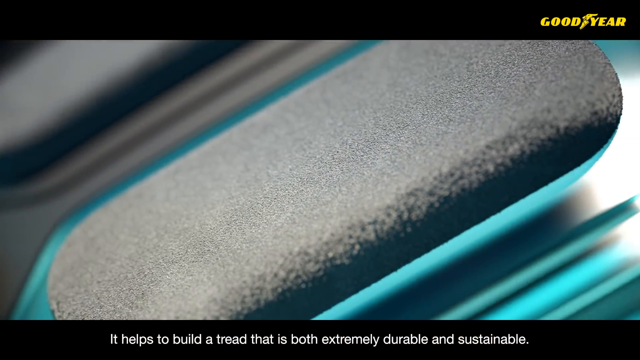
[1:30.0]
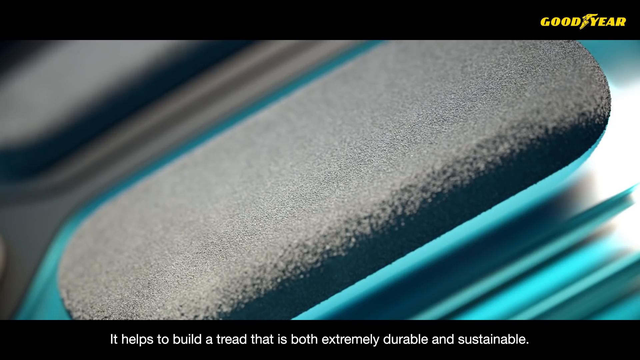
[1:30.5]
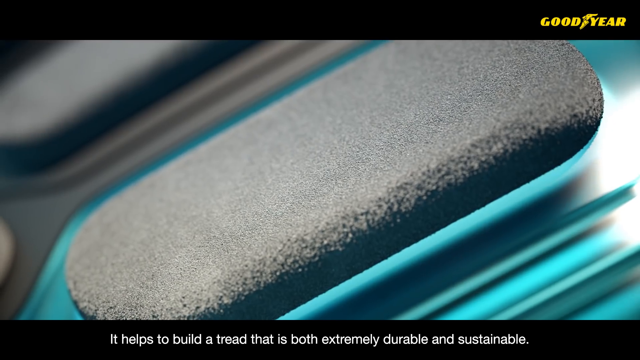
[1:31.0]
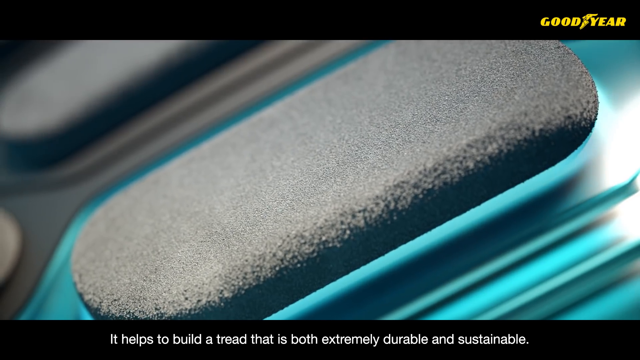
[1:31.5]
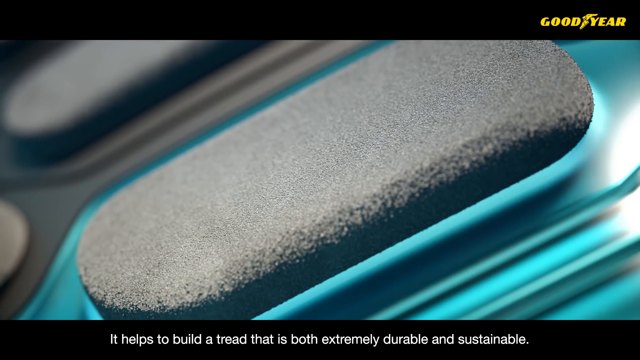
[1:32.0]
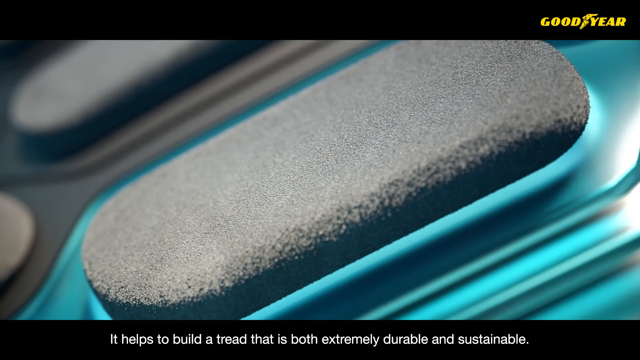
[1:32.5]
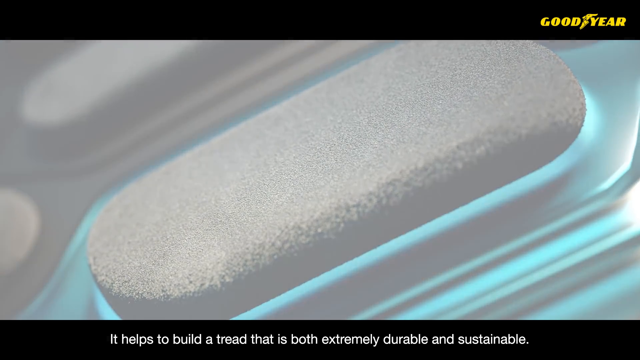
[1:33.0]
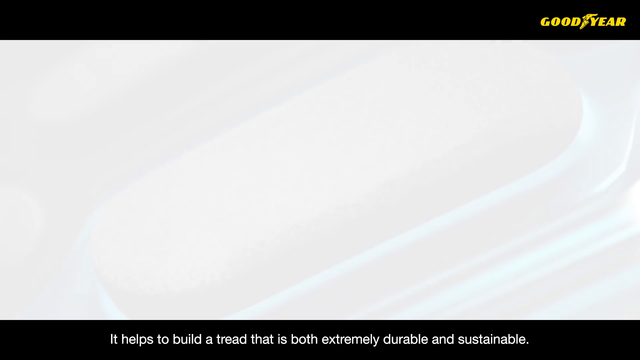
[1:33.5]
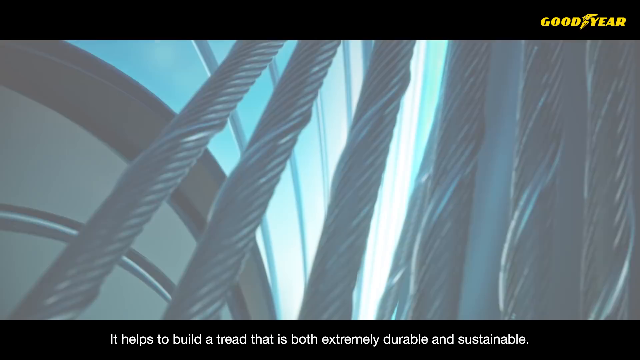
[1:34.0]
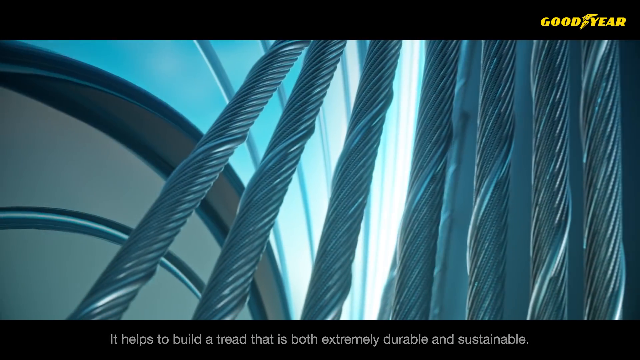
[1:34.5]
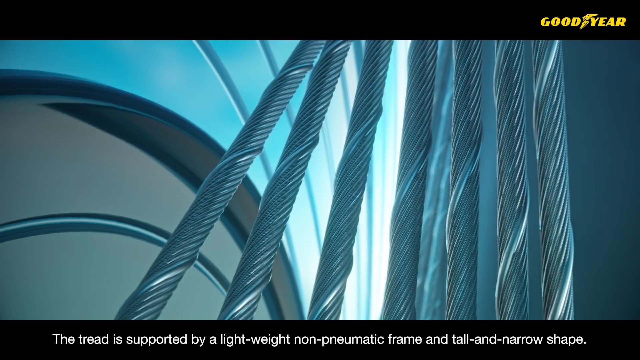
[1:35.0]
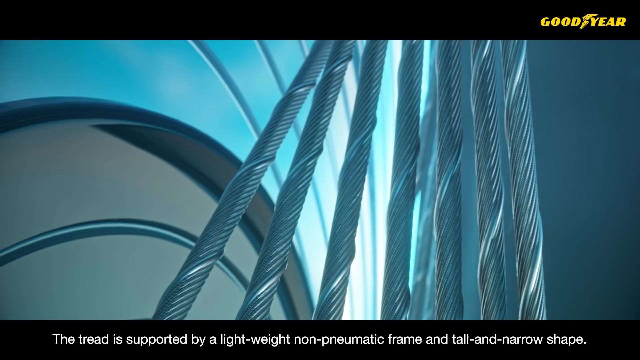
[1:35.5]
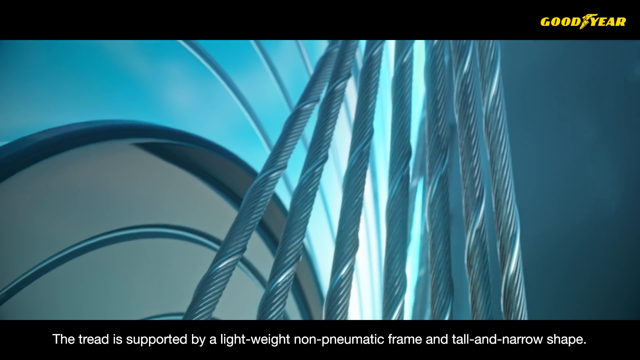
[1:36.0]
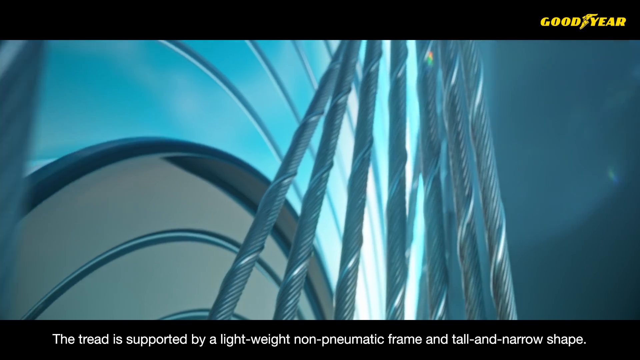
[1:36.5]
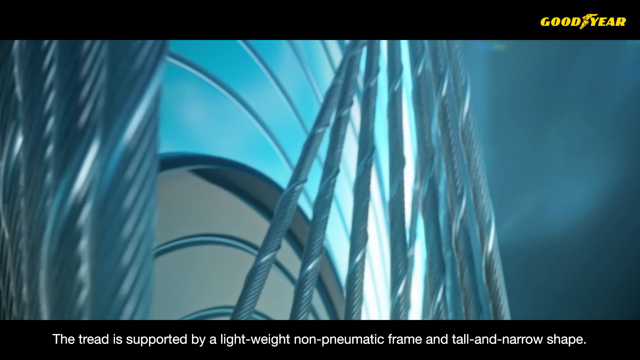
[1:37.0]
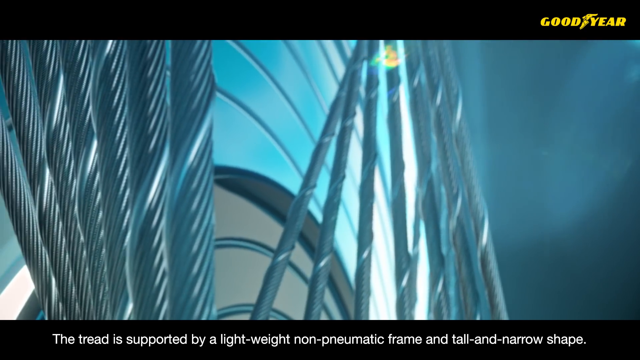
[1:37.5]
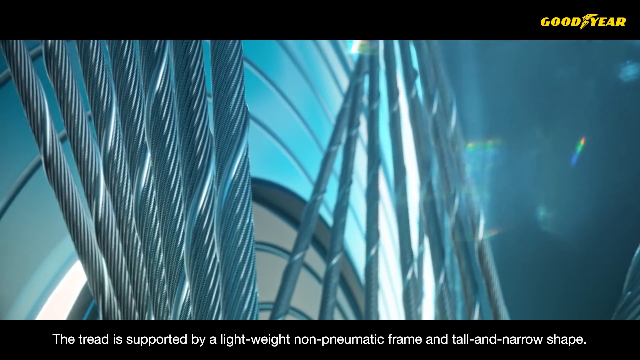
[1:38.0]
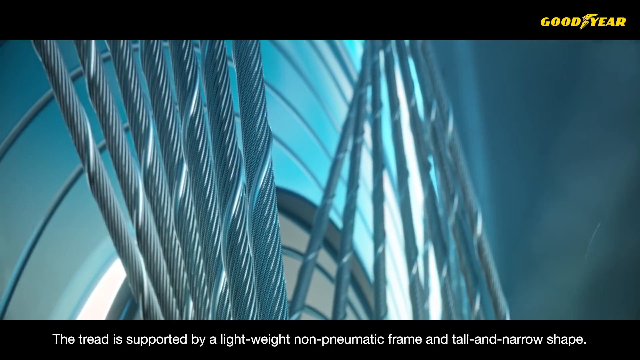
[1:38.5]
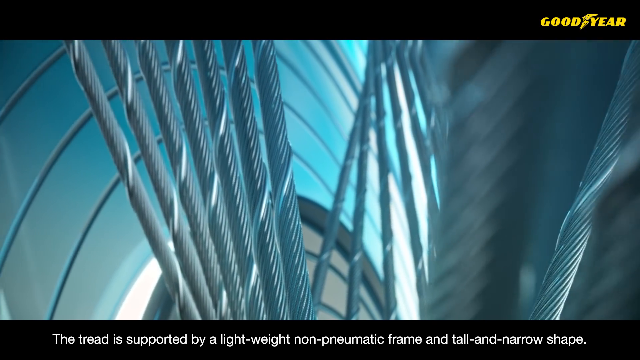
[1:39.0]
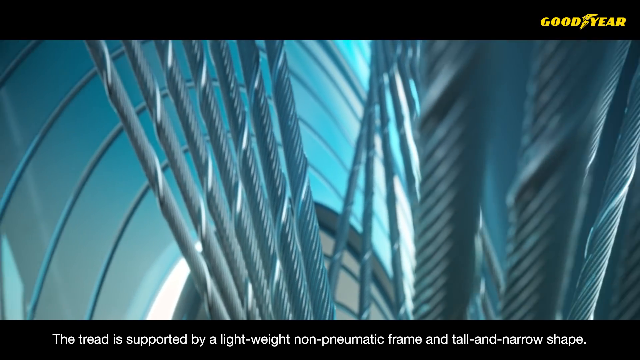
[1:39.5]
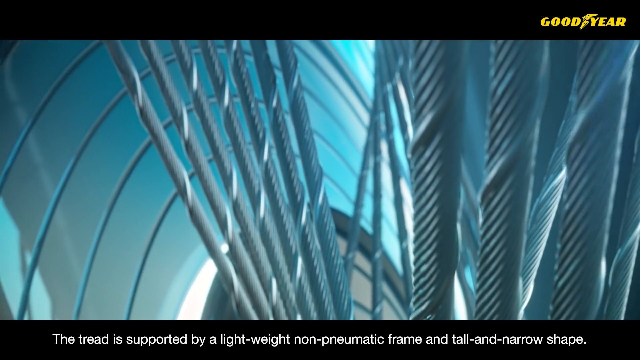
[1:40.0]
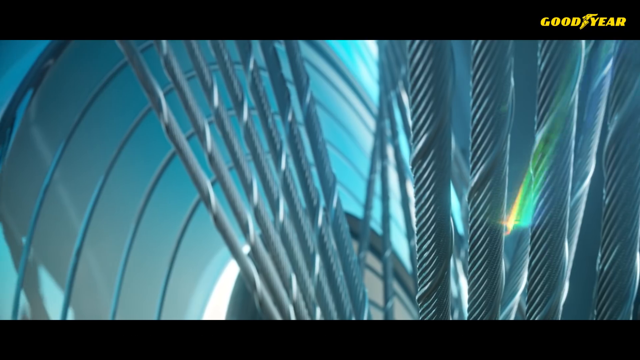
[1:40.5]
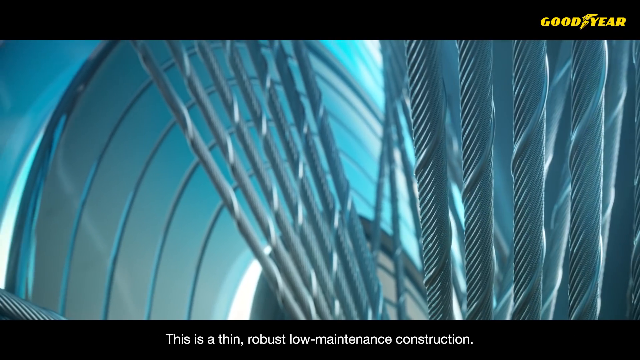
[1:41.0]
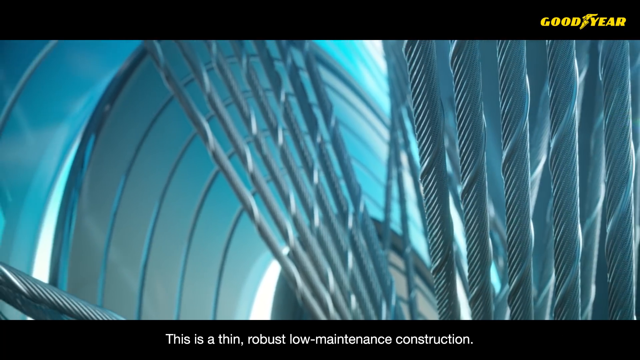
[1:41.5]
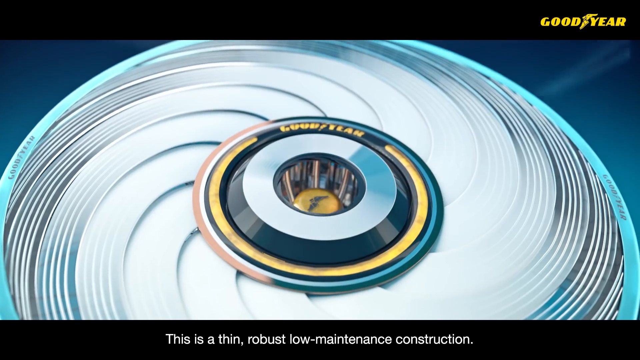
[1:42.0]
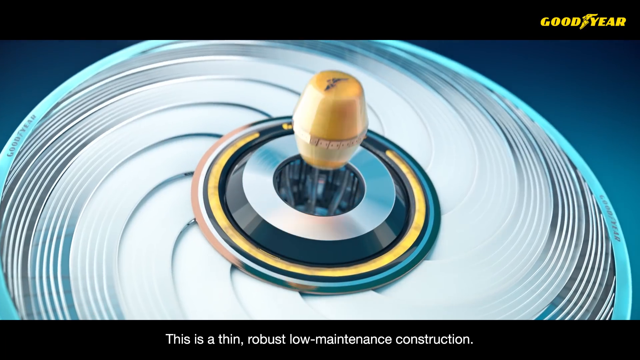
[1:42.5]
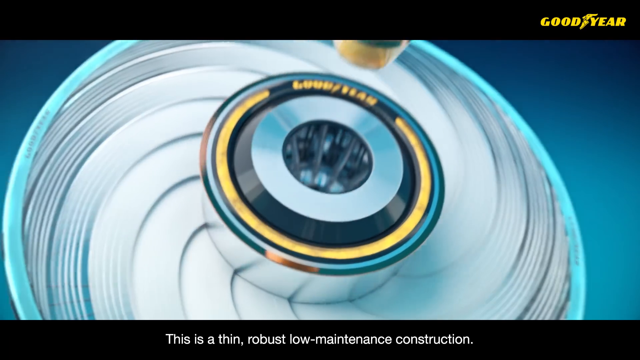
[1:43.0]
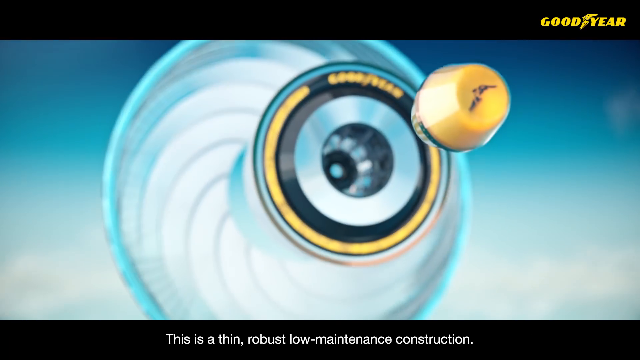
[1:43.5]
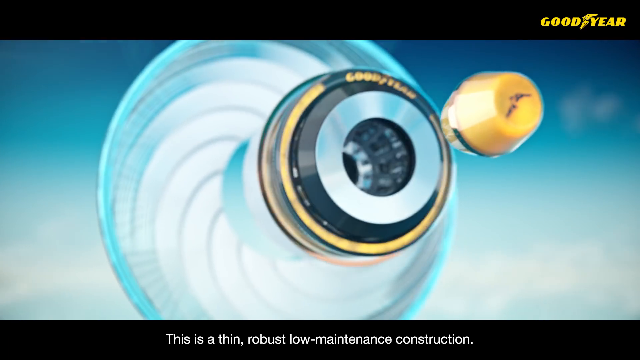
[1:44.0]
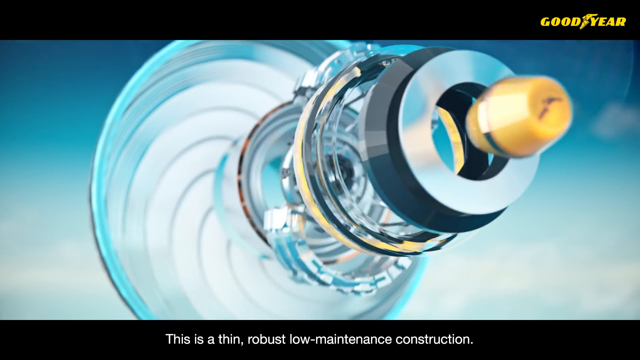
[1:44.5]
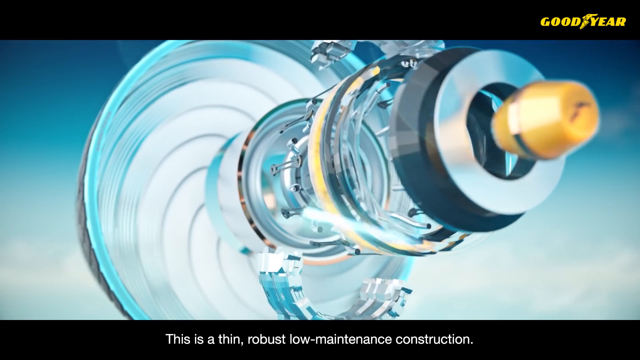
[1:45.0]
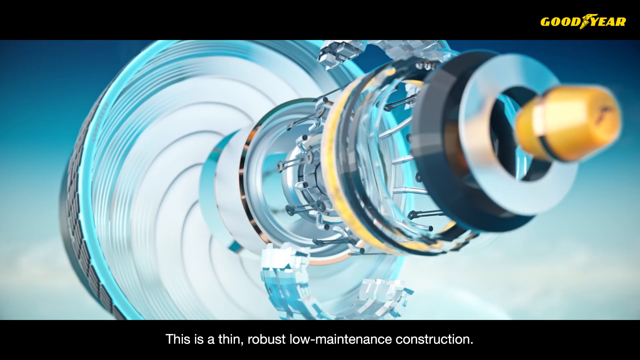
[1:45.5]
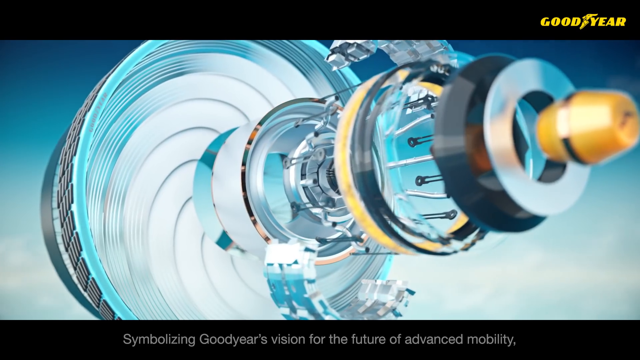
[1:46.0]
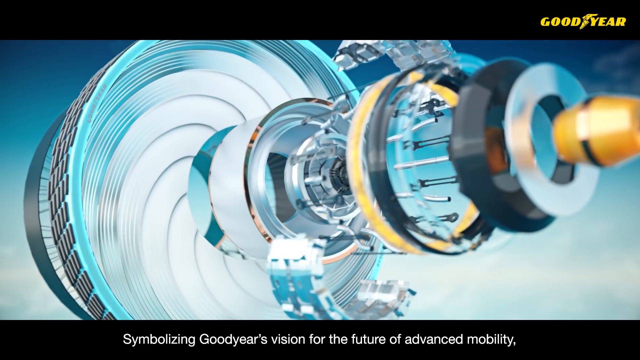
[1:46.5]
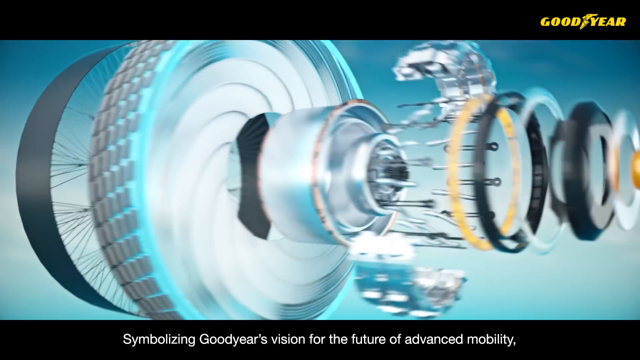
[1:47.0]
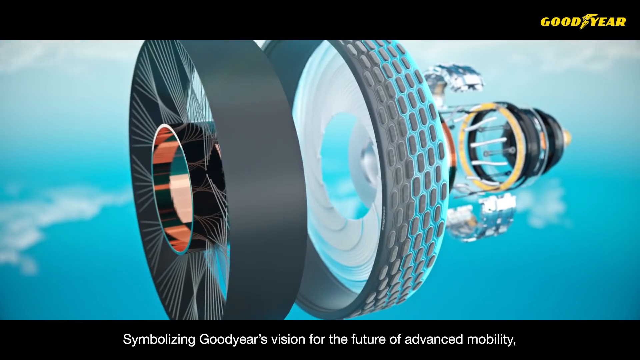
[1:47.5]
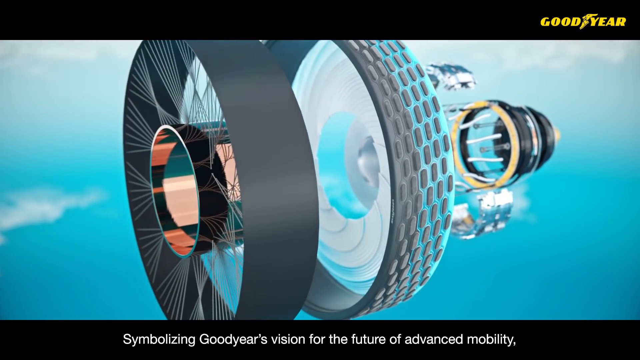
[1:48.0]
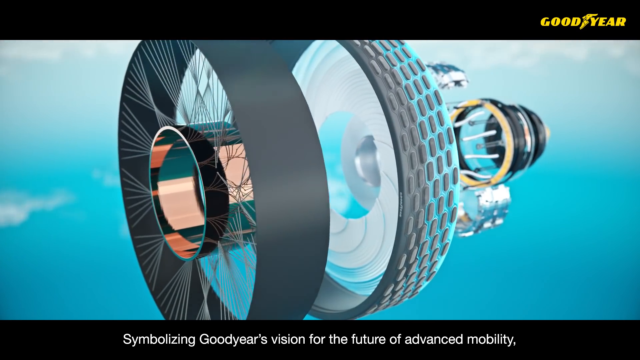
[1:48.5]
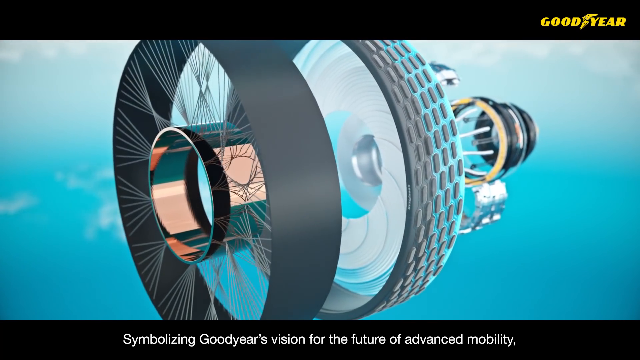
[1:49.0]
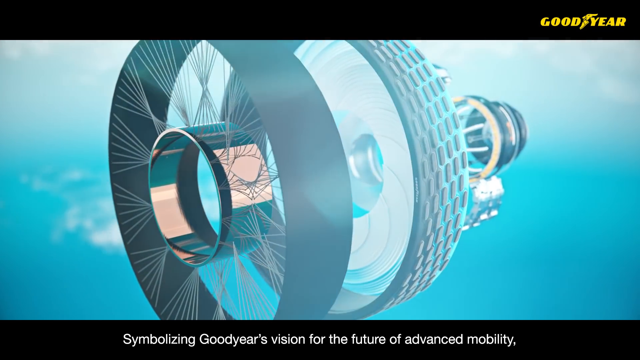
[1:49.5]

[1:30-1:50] The video continues to focus on specific characteristics of the tire. The tread is shown, followed by ropes relating to the tire's construction. At one point a 3D image of the tire appears, shown as if it could be pulled apart into smaller circles that fit inside each other, representing parts of the tire's makeup. On-screen words describe the tire as designed for either future mobility or exceptional mobility.